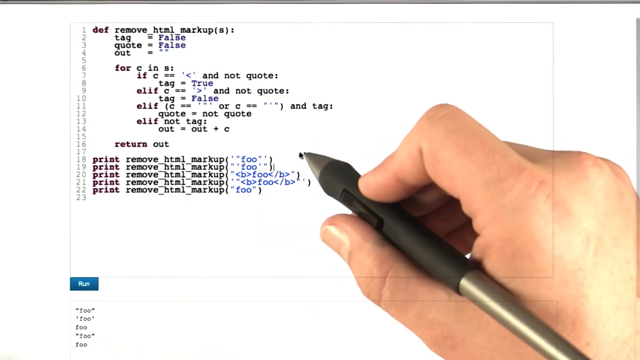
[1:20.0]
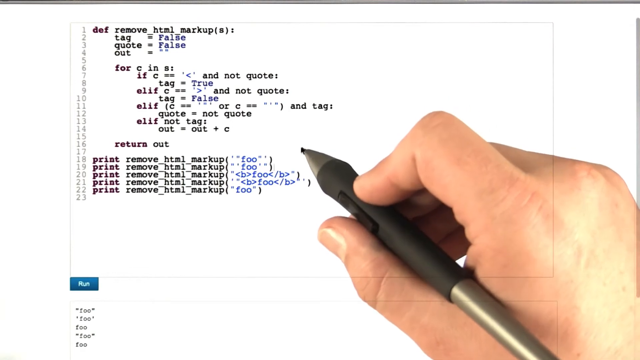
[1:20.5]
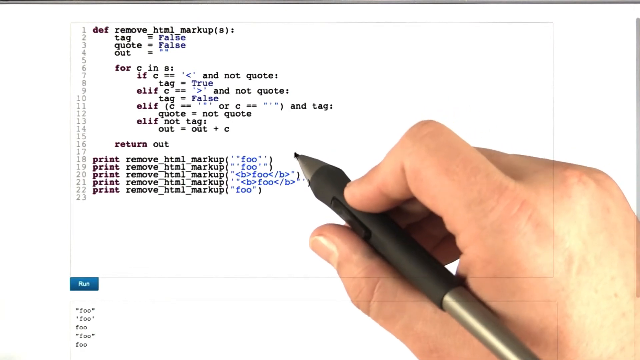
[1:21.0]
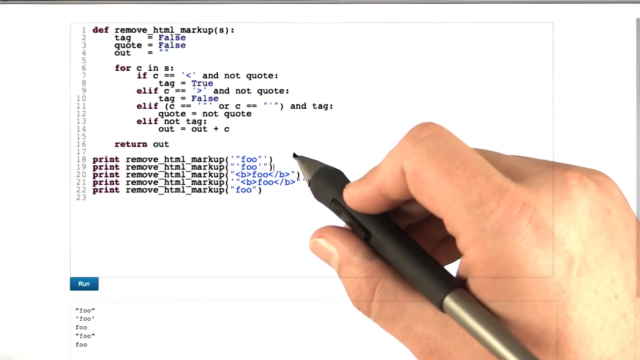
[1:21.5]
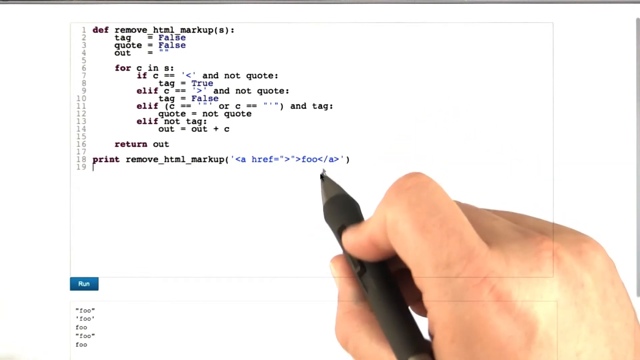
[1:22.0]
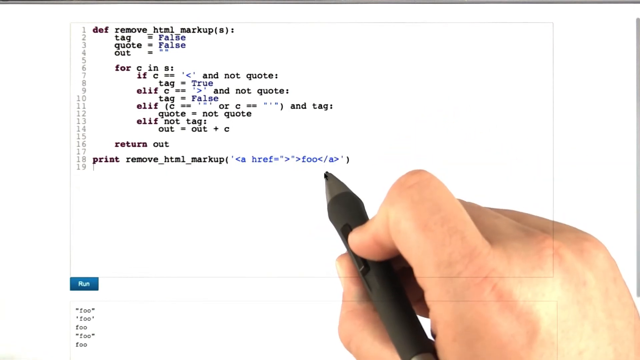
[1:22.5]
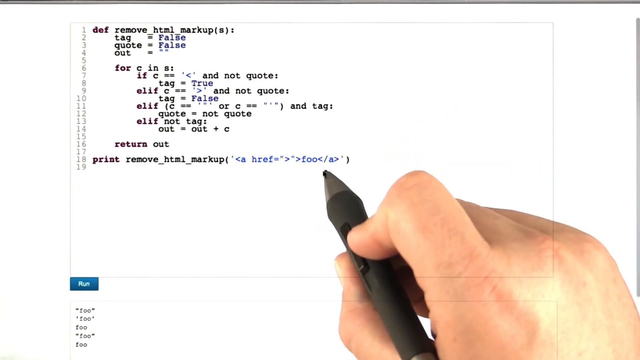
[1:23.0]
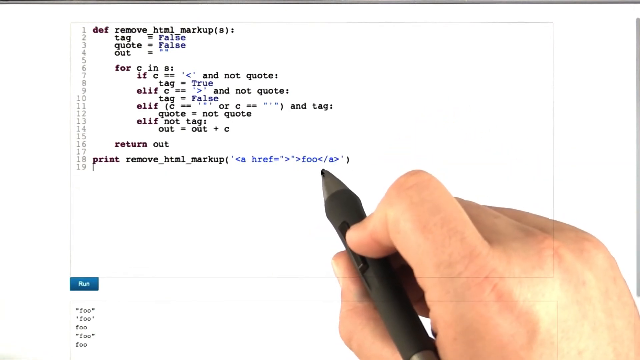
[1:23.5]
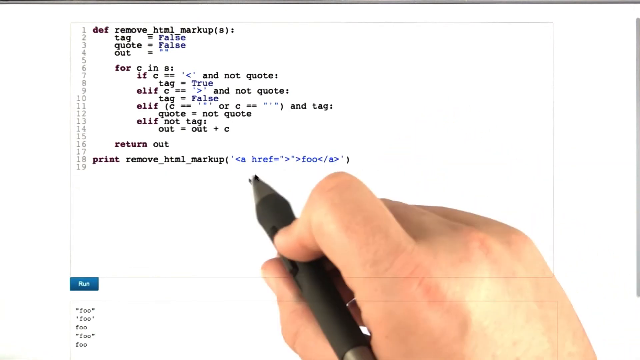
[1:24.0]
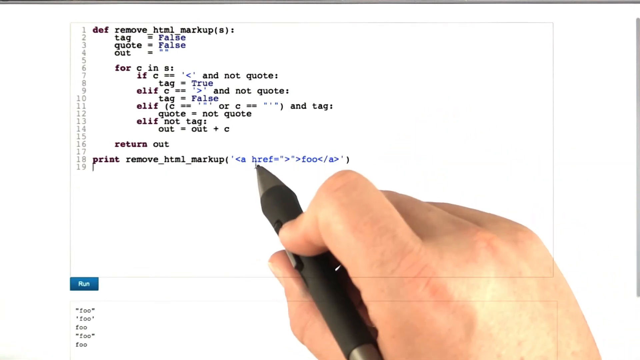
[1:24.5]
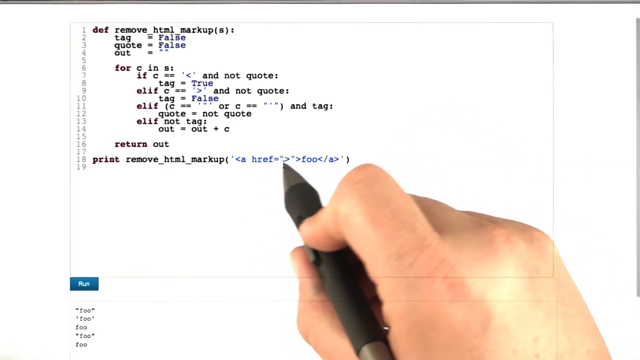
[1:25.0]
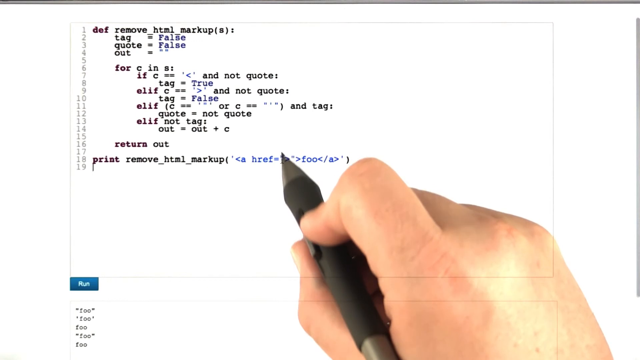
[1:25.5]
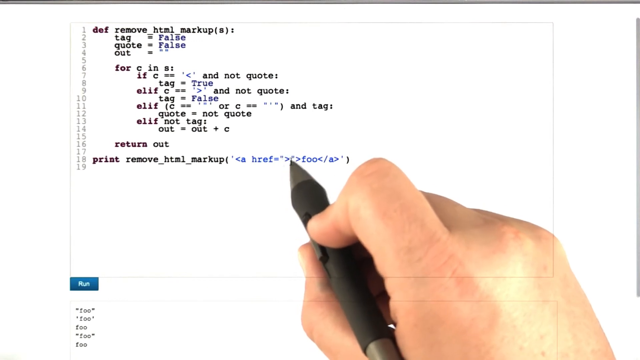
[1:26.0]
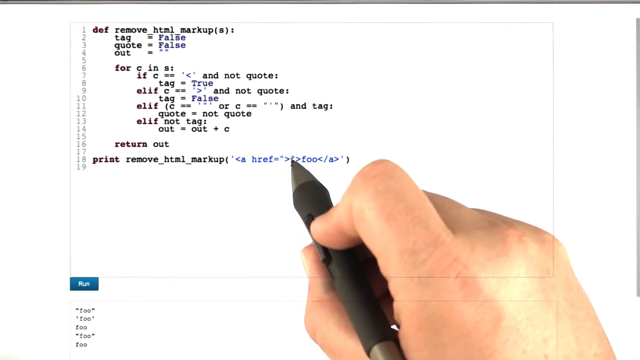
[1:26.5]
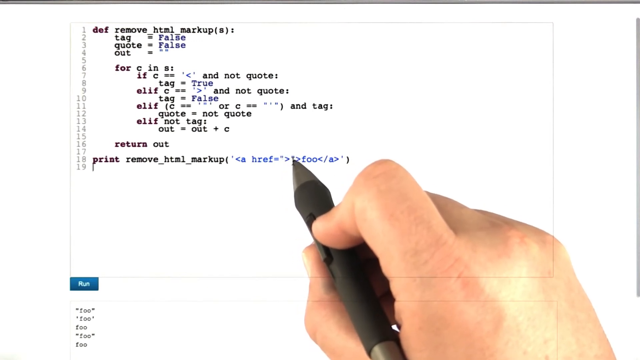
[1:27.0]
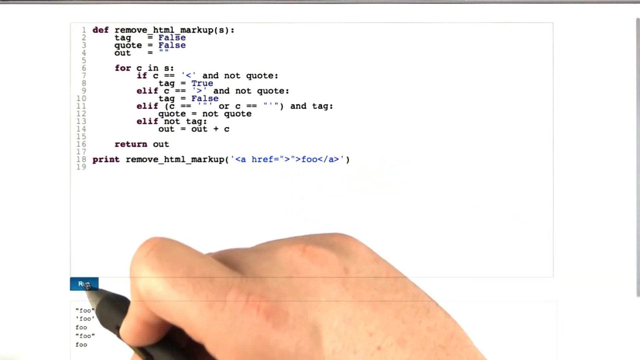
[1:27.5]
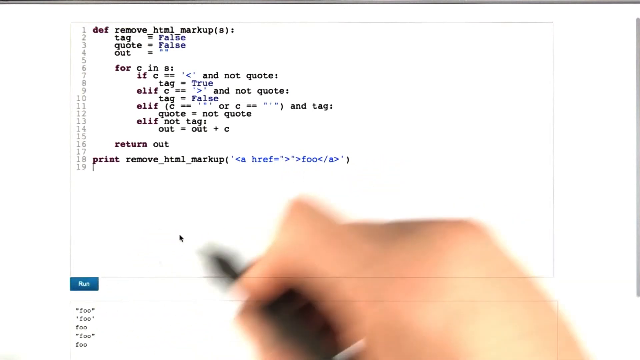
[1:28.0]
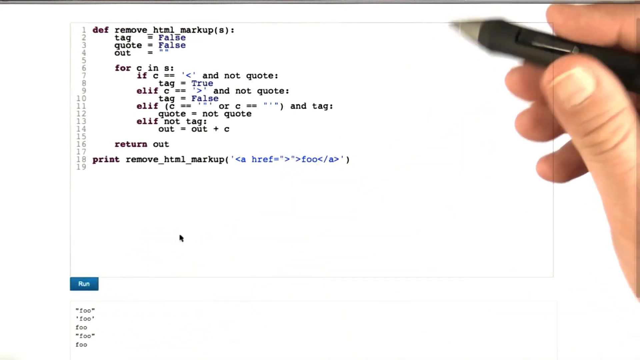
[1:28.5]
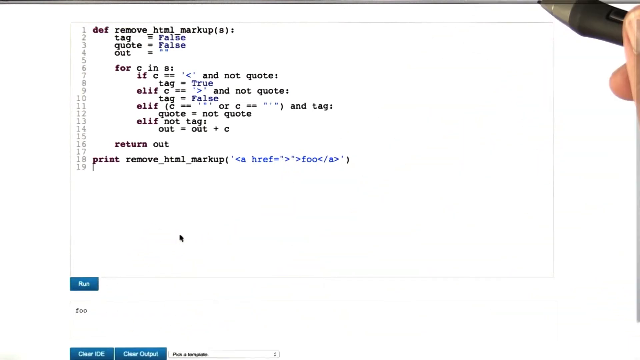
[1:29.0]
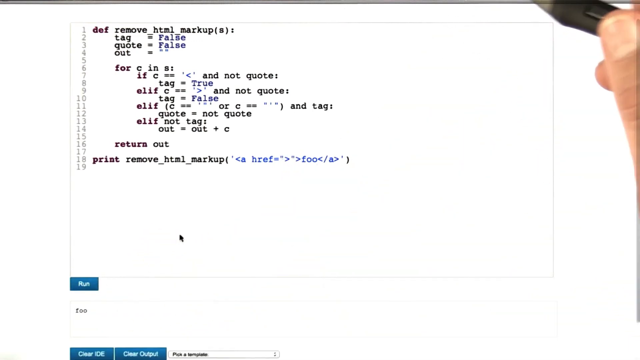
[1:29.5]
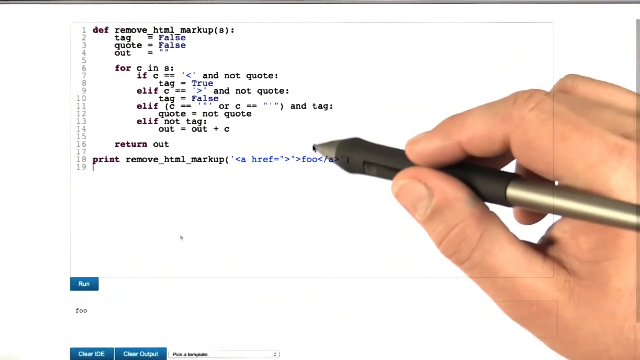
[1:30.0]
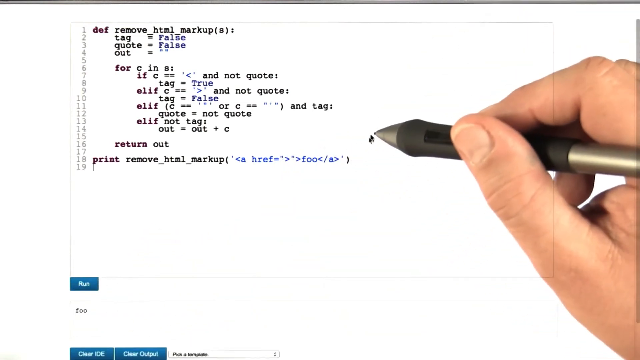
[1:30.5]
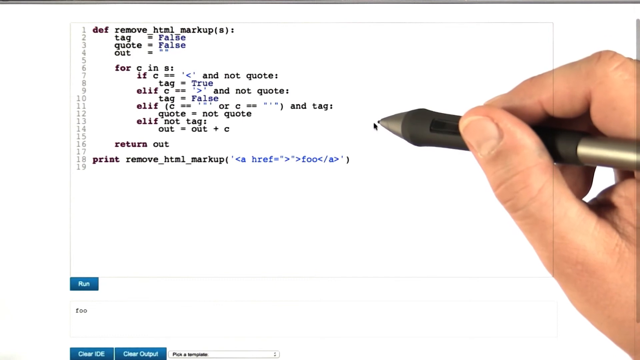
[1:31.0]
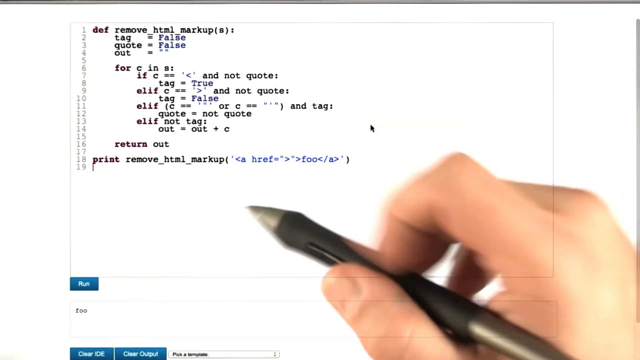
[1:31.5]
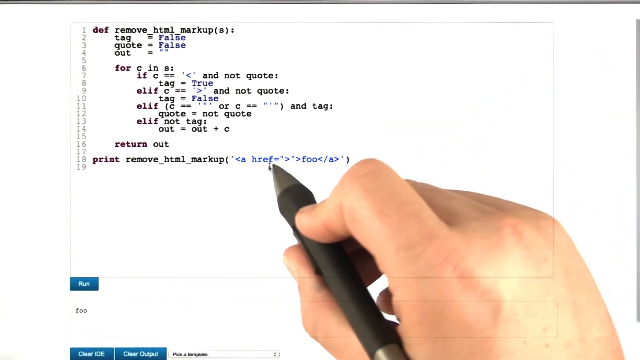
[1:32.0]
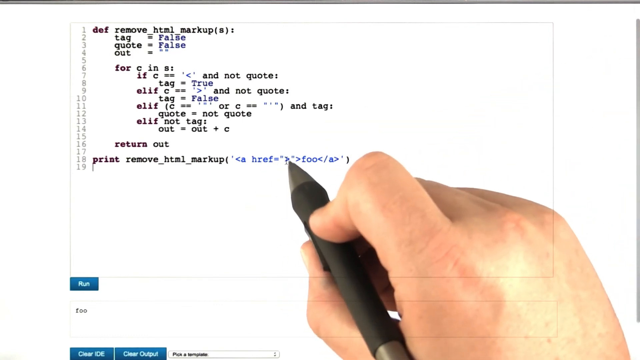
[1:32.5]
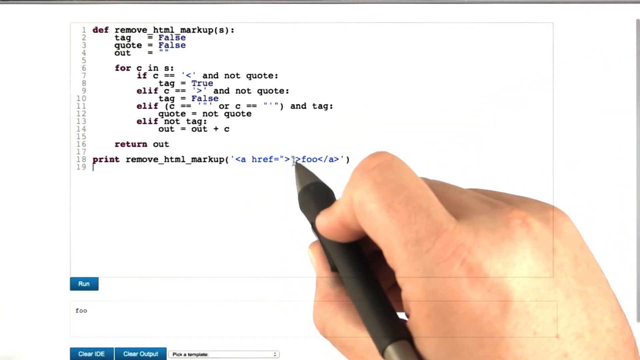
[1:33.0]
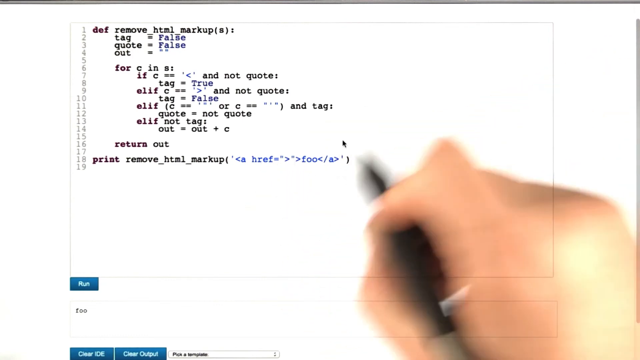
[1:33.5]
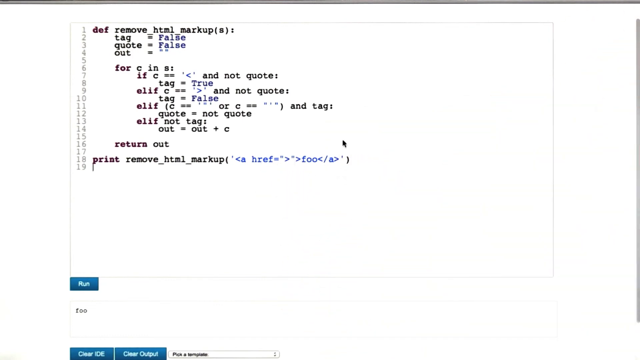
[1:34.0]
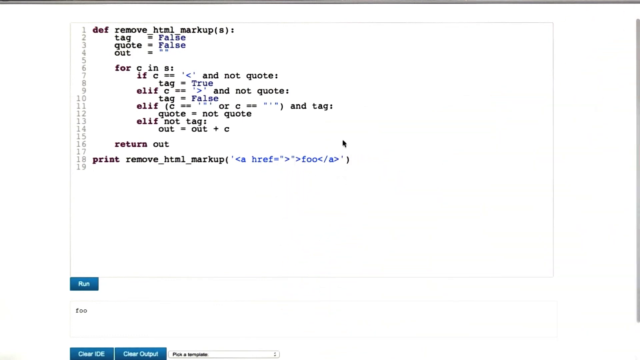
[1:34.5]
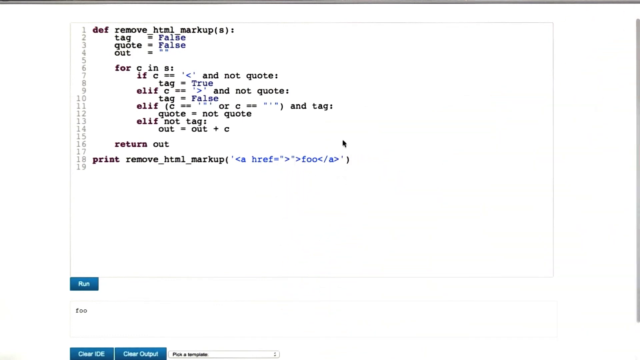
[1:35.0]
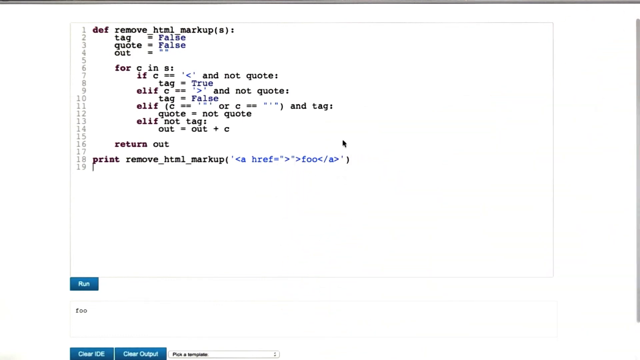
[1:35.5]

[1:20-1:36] The ink pen points at line 18. All the lines below 18 vanish; the number 19 is still visible below it, but there is no information to the right of it. The pen points at line 18, kind of at the blue portion, then goes down below run. The pen then is in the top right corner, showing just a little of the grip, a little of the silver casing, about a quarter of the thumbnail, and one thumb fingerprint from underneath. It moves back over and points at line 18 some more, then goes off the right side again, kind of moving back and forth between line 18 and run. Line 1 has its information right from the number, lines 2, 3 and 4 are indented a little, line 5 has nothing, line 6 is indented, lines 7 through 14 are indented more, there is nothing on 15 or 17, and lines 18, 19, 20, 21 and 22 are right up next to the number. As the hand moves the pen around, the pointer finger is kind of pressing hard on it.